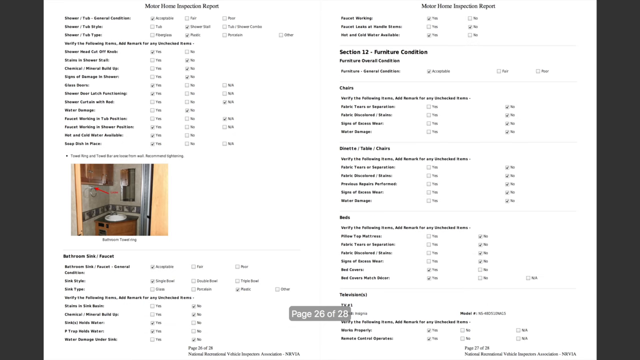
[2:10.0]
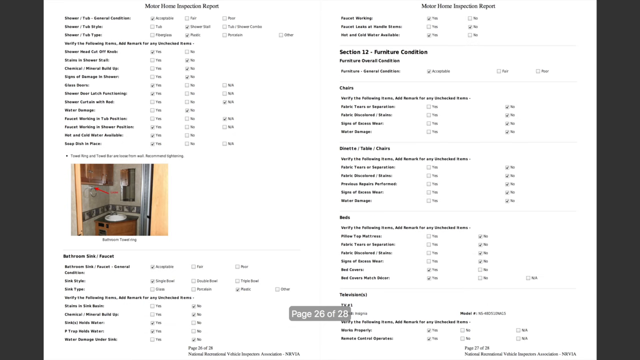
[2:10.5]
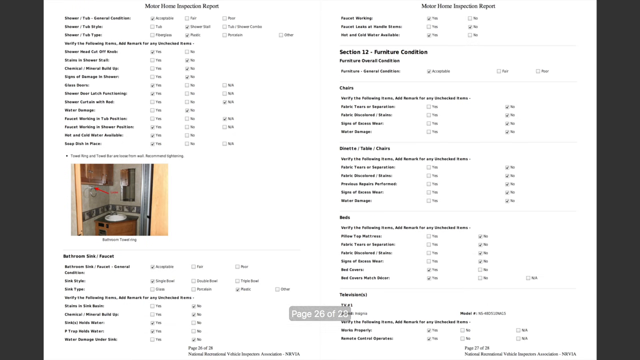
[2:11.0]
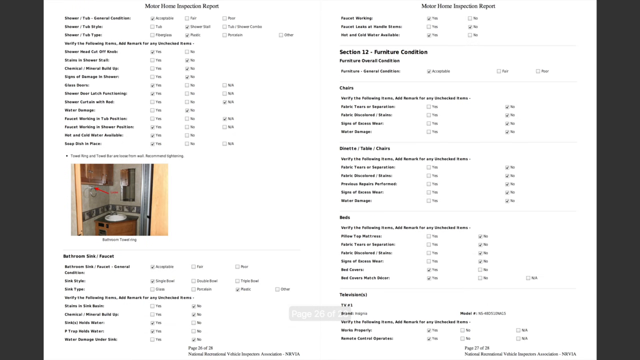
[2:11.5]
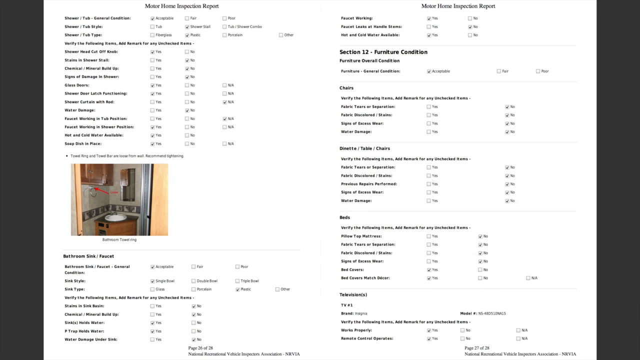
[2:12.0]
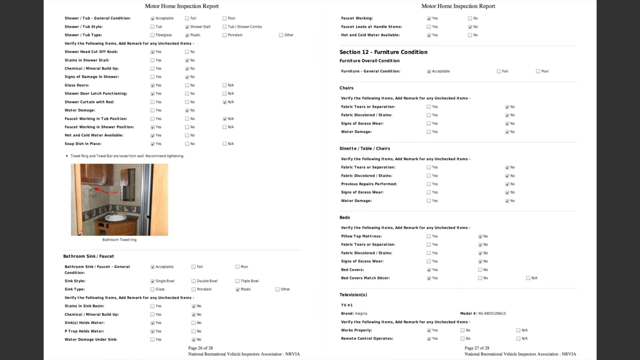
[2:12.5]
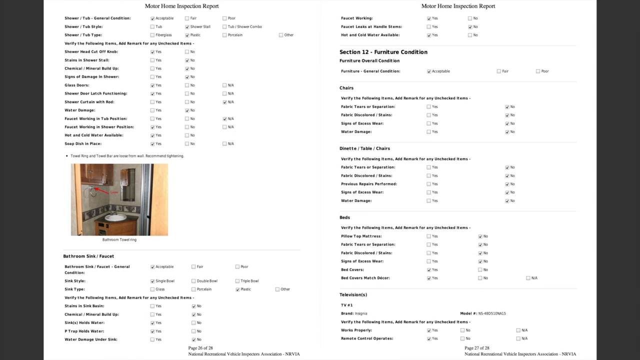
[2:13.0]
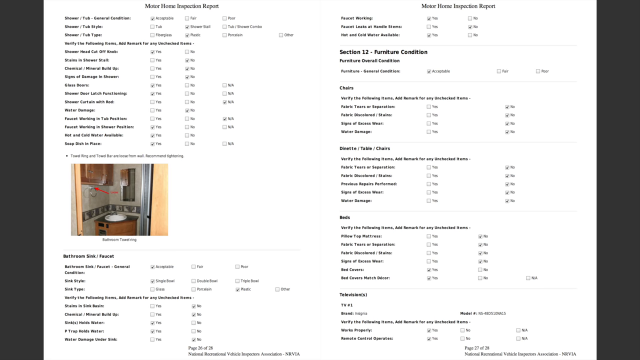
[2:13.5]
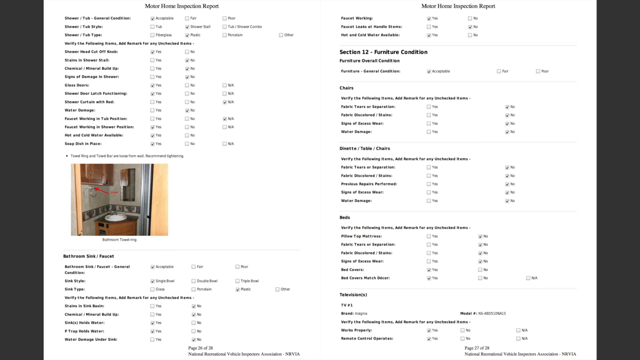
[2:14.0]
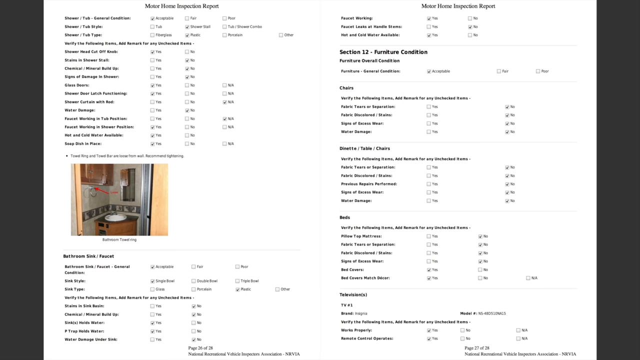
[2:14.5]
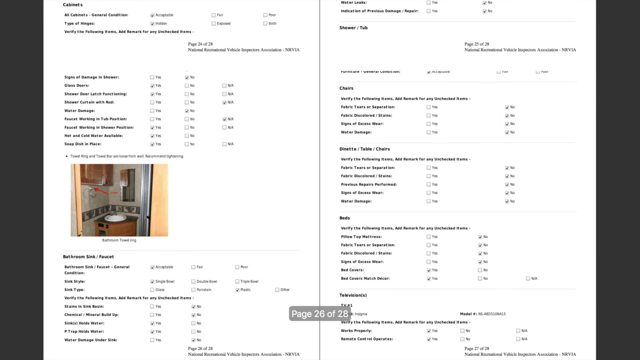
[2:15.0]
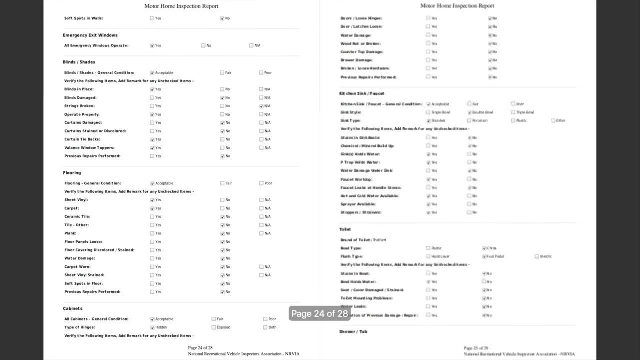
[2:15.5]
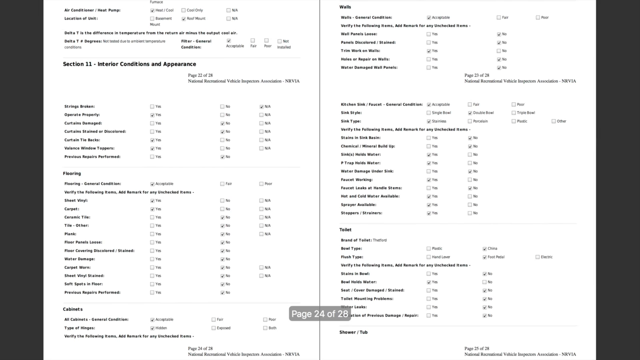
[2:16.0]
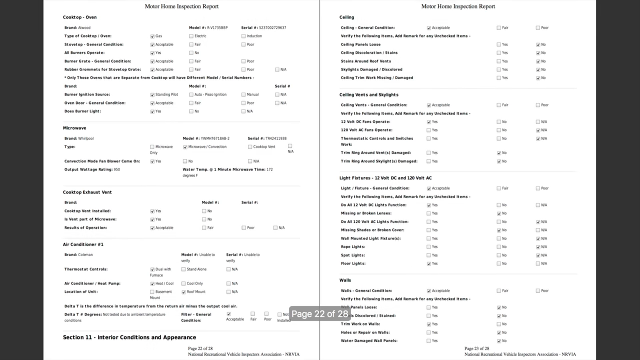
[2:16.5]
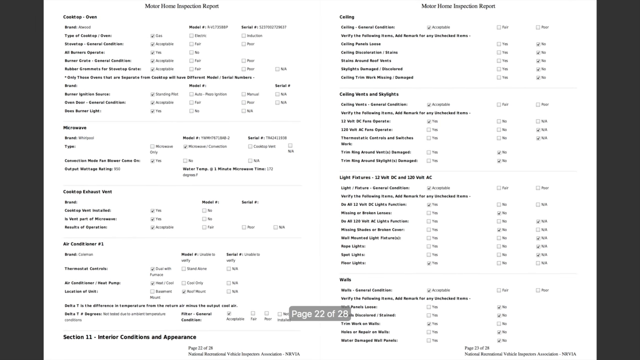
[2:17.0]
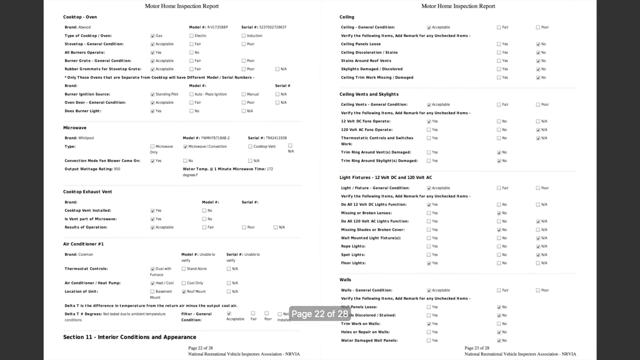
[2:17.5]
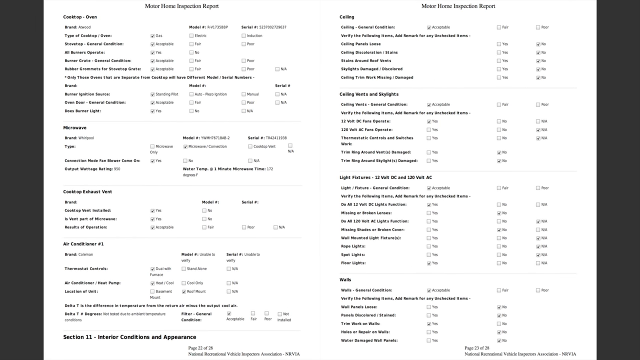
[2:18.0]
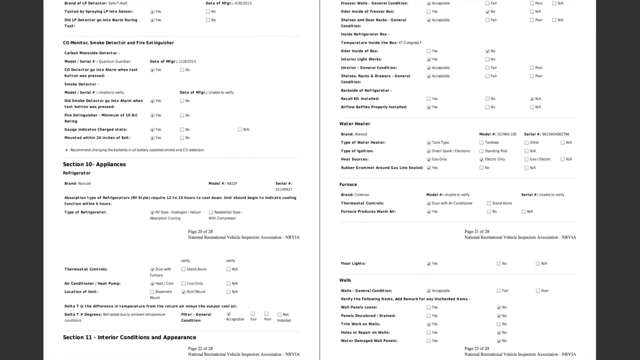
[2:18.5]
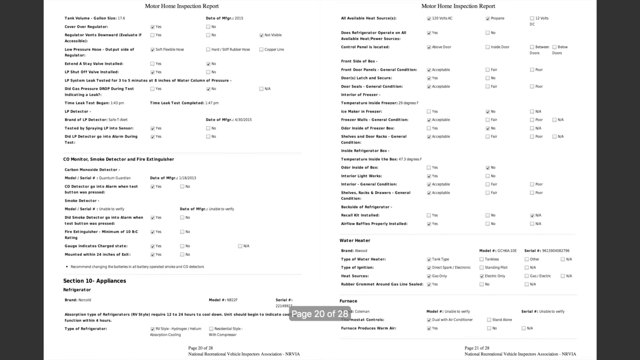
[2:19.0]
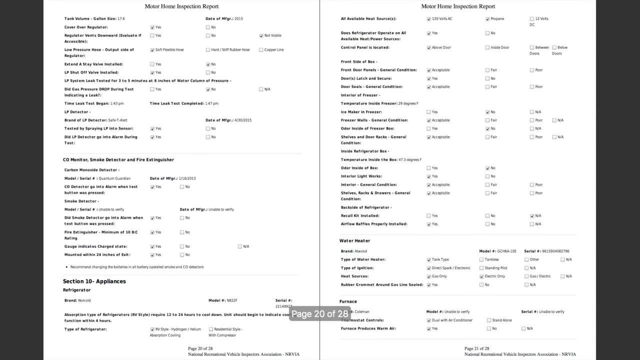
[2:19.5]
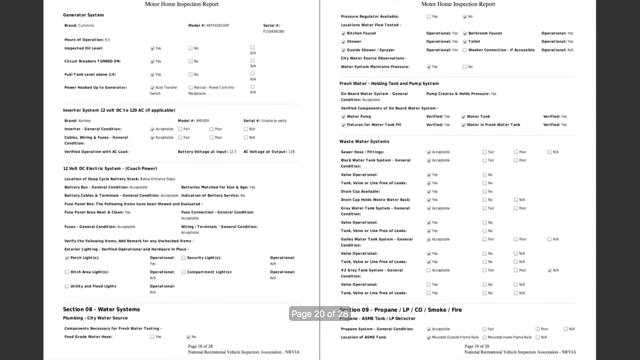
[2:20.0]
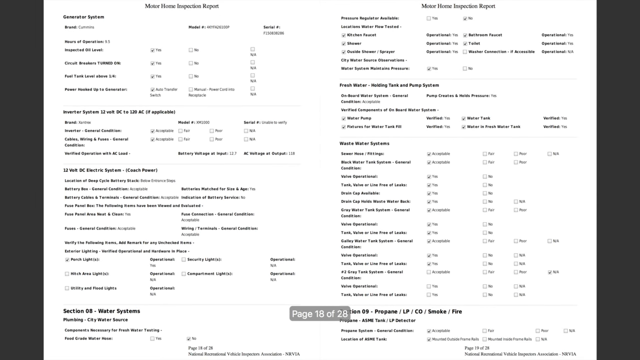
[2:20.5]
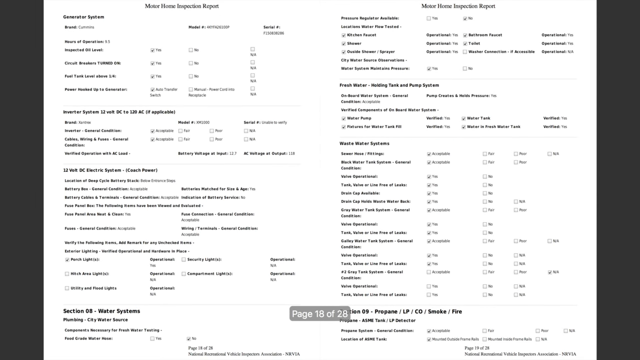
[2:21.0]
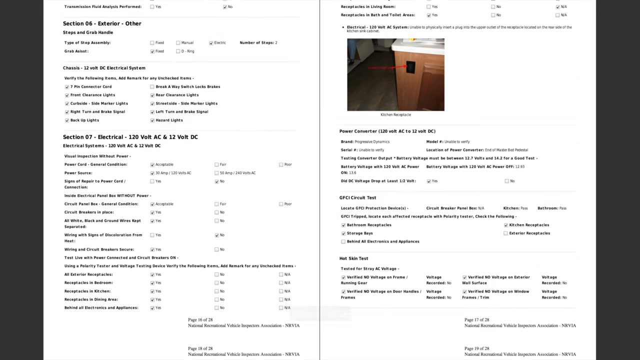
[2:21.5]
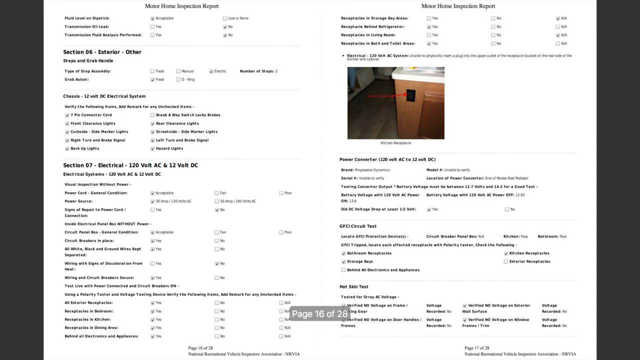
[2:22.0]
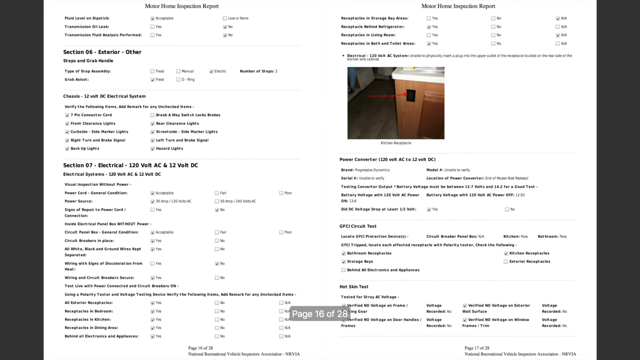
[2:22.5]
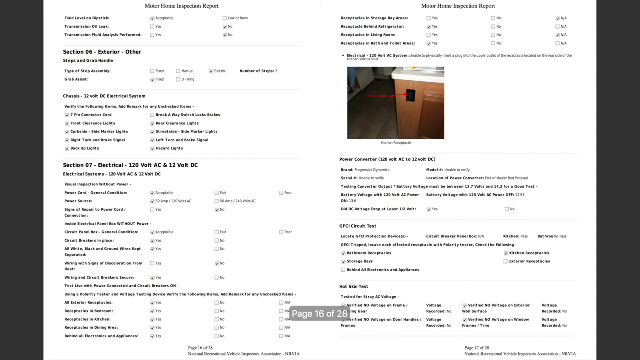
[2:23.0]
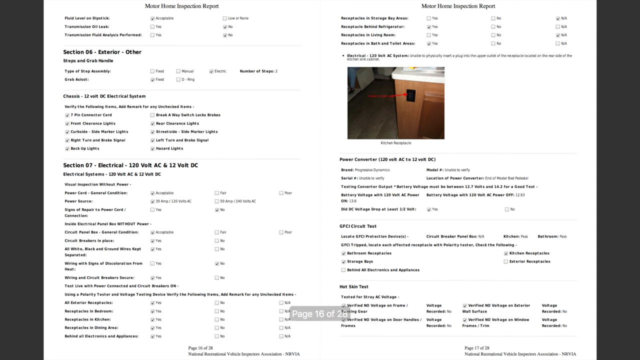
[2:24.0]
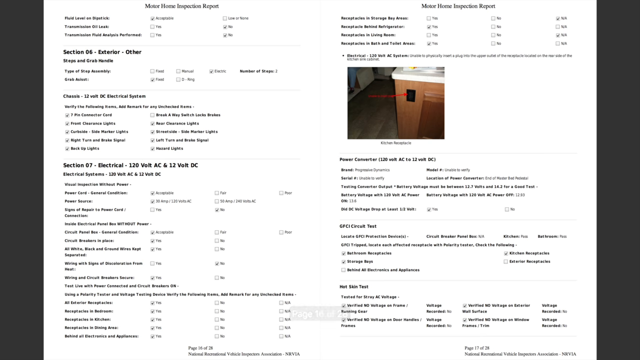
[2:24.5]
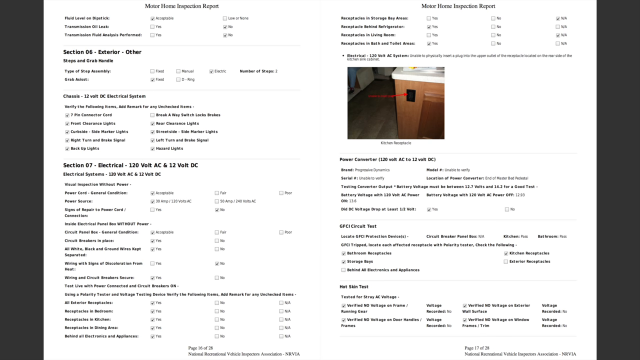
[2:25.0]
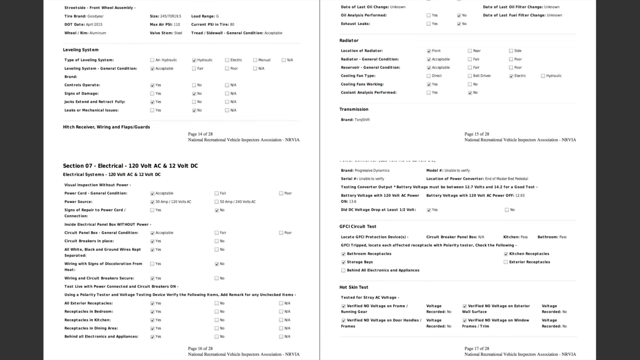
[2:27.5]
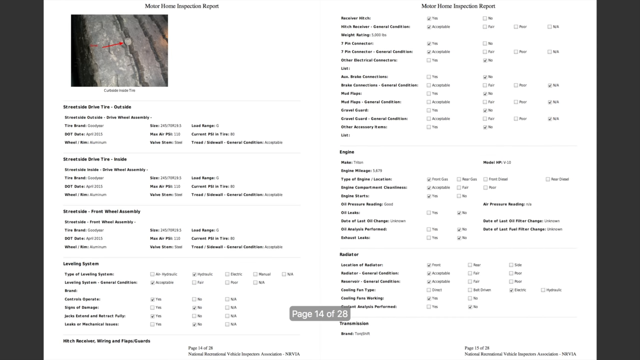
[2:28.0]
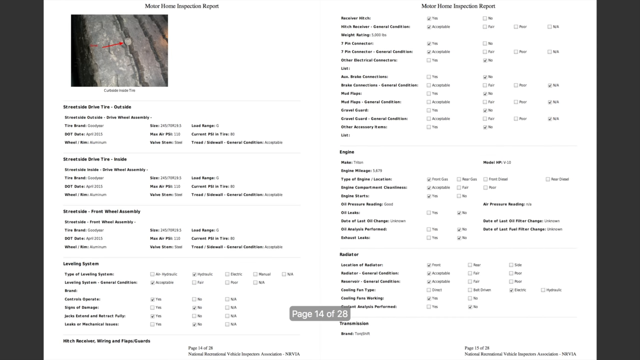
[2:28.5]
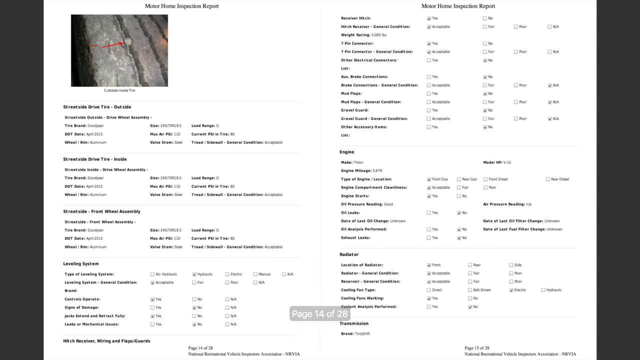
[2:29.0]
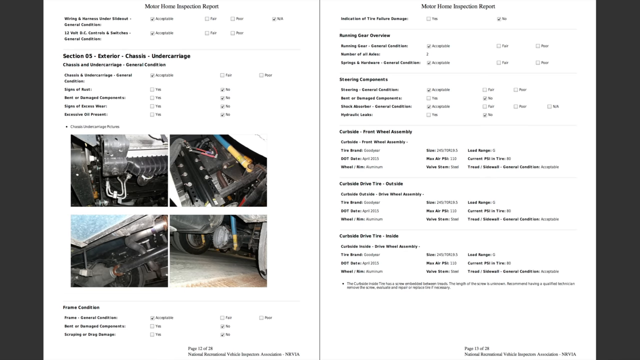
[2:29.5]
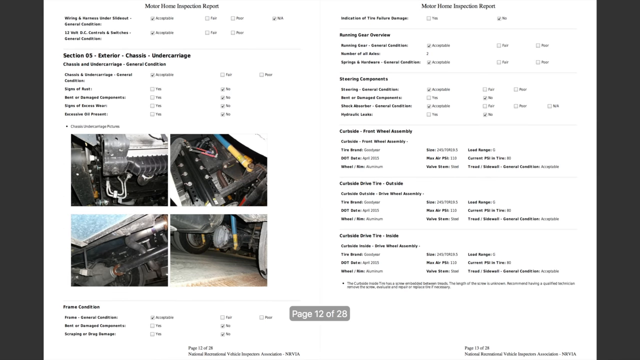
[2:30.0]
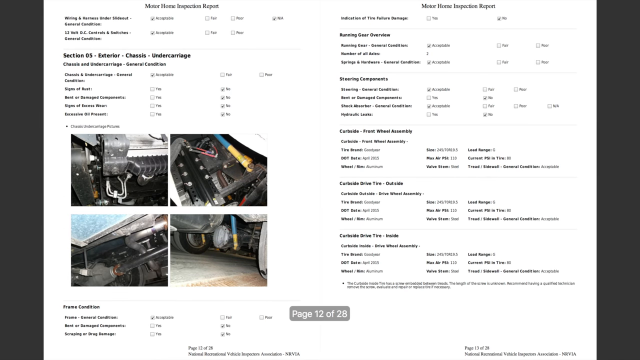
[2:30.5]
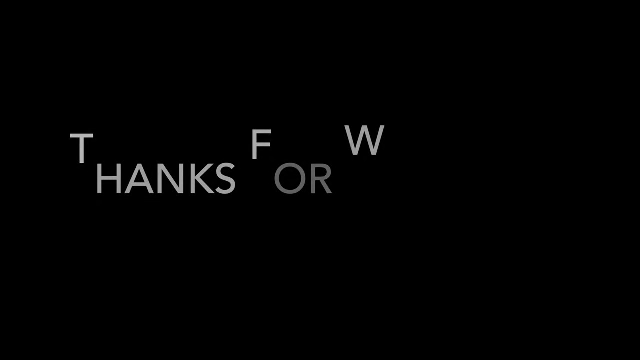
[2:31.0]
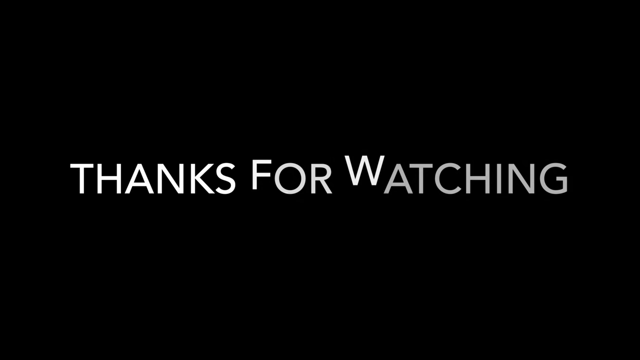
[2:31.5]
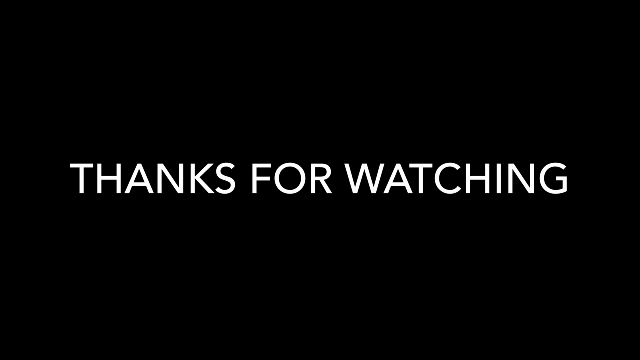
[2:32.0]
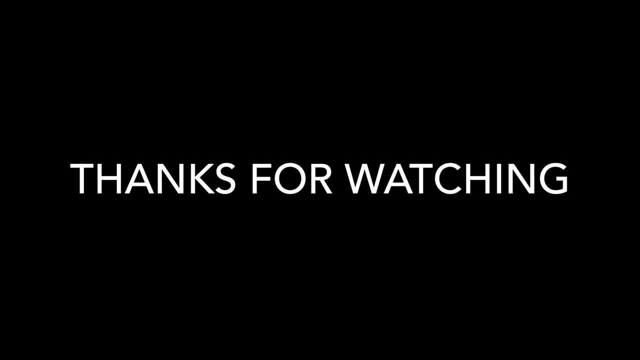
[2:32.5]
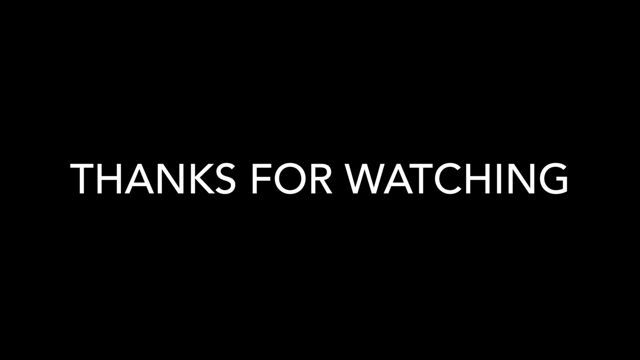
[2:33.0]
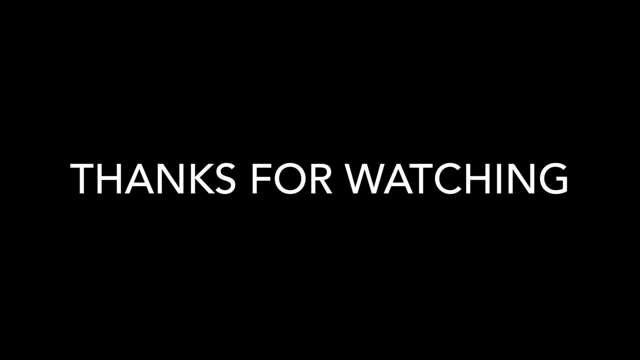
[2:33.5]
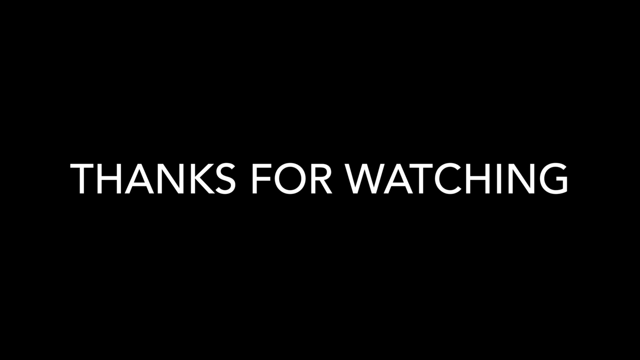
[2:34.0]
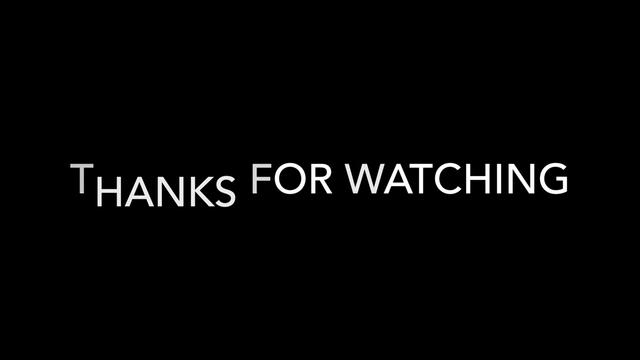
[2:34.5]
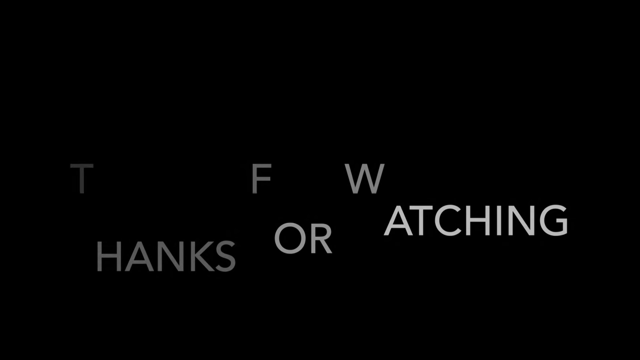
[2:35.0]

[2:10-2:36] More pages of the inspection report are scrolled through; the report seems to run to over 28 pages. At the very end, a simple thank-you screen appears where the capital letters of each word fall down into place, reading "thanks for watching". Then all the letters fall down, and the video fades out.